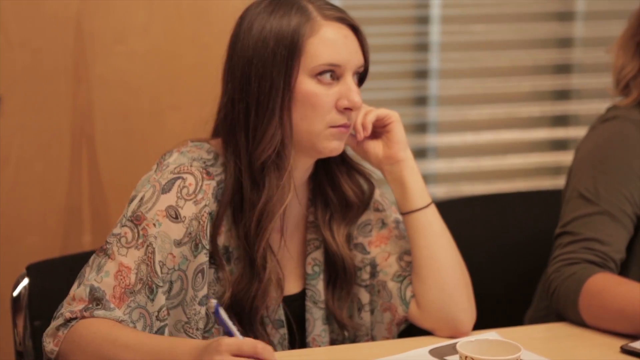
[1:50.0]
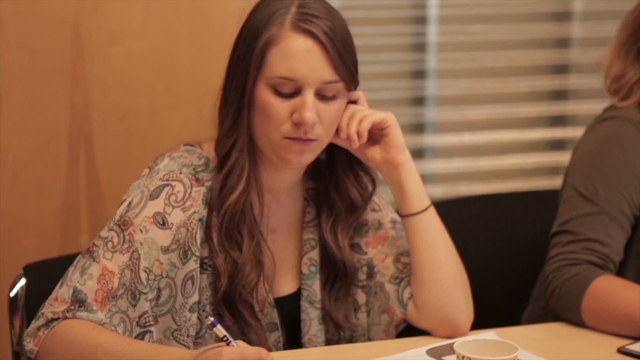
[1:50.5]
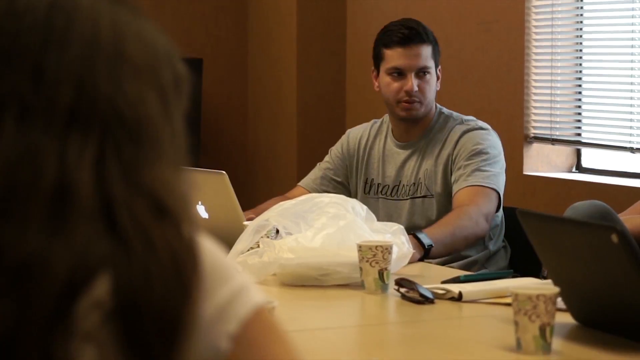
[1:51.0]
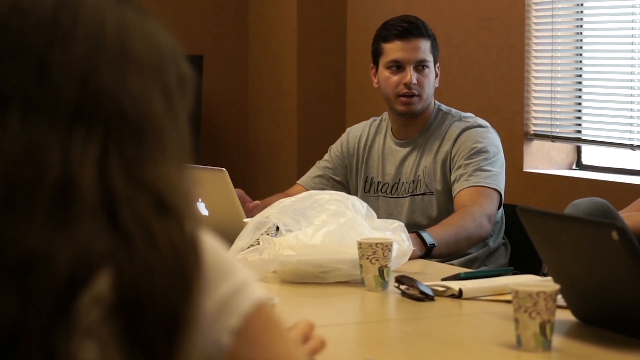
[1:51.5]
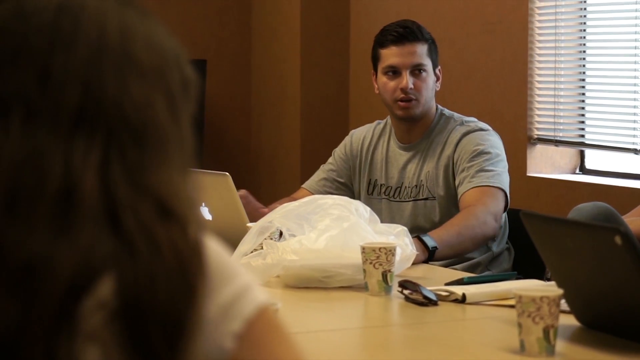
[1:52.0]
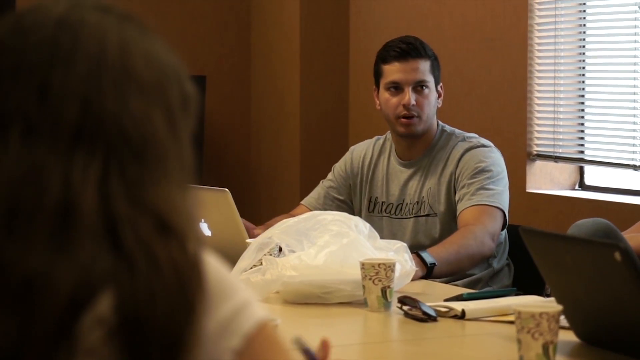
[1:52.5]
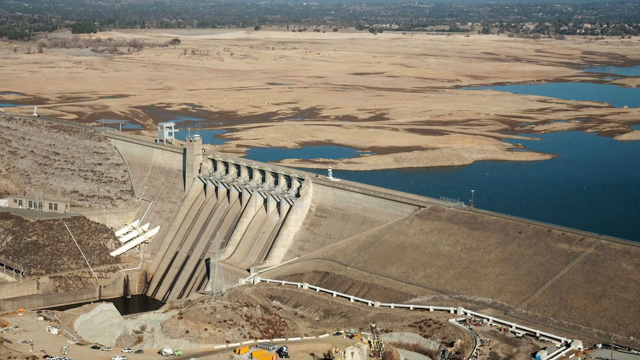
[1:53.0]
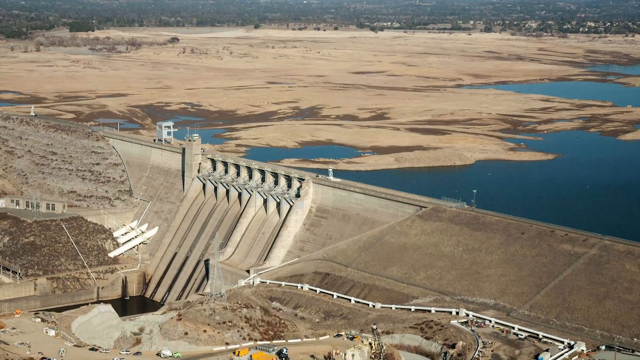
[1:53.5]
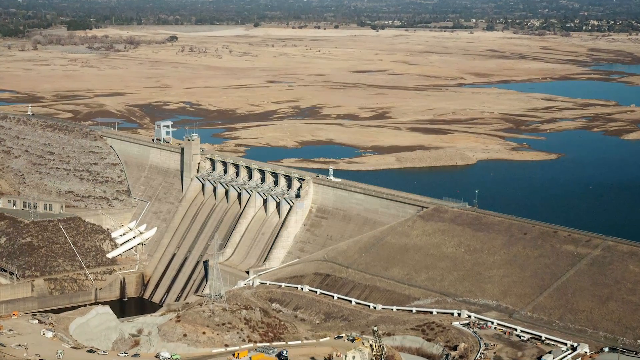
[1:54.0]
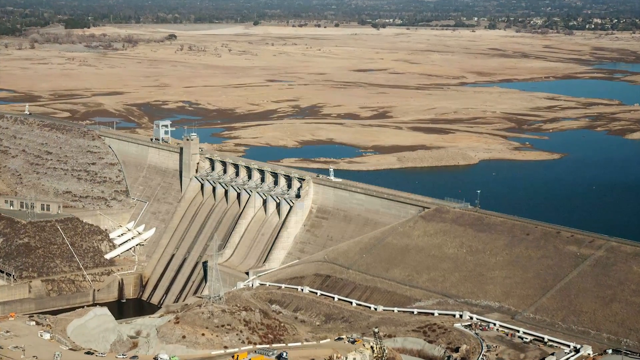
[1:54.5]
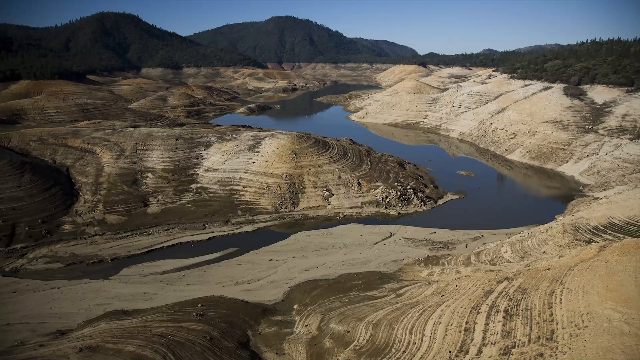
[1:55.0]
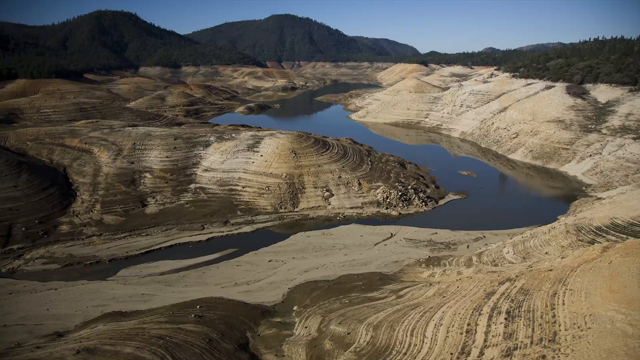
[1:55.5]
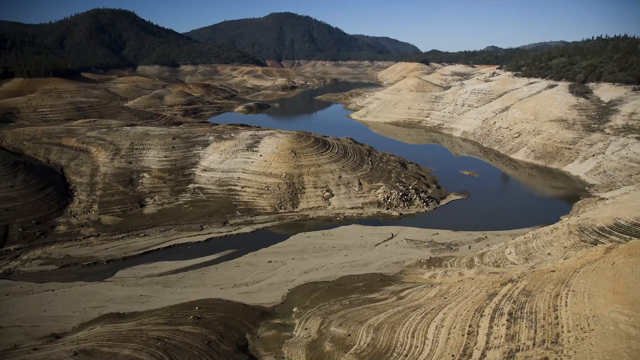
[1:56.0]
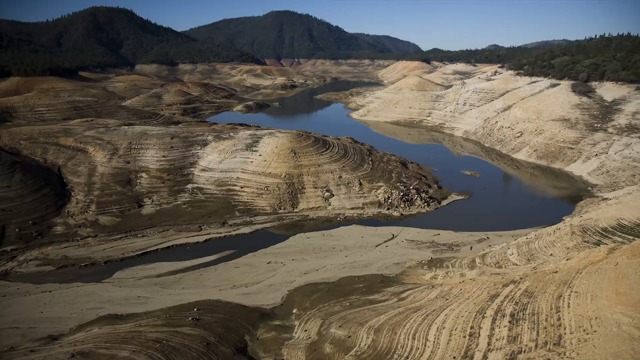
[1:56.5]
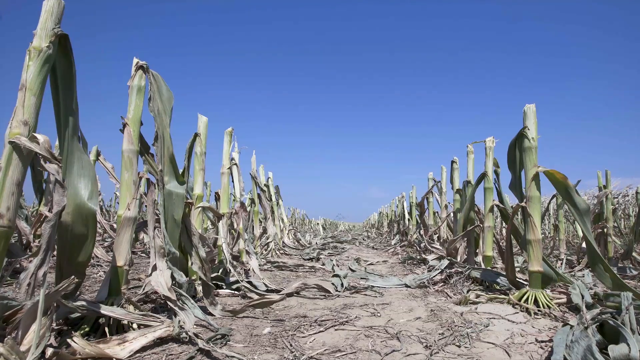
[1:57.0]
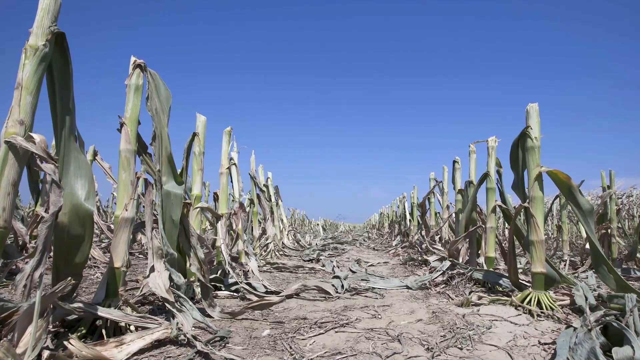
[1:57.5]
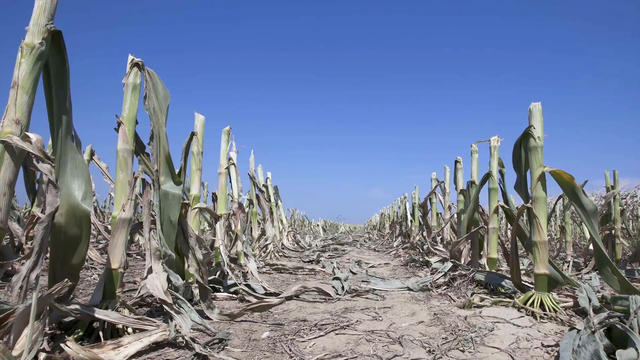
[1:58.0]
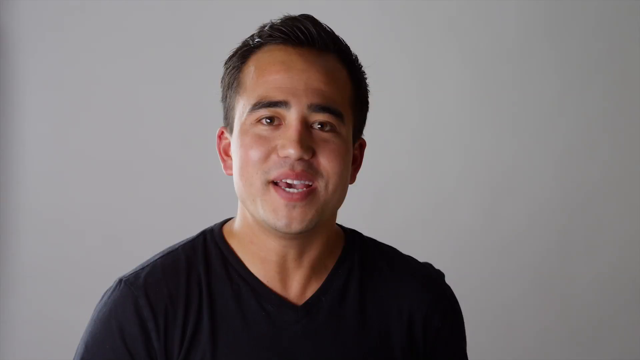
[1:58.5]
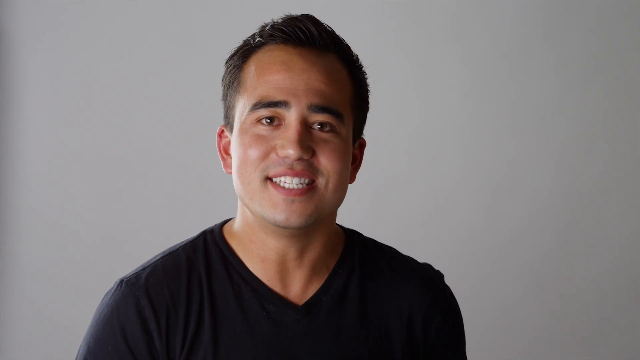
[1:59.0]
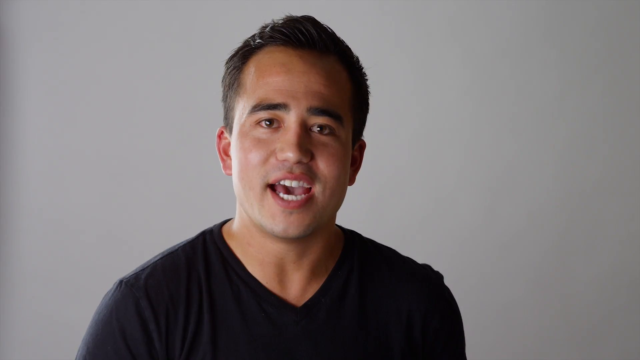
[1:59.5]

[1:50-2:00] A young woman, perhaps in her 20s, sits at a desk on a black chair. She has long brown hair that reaches her chest area and wears a floral dress. Her left arm is raised to her cheek so that she is somewhat leaning on it, and she is looking towards the right; she seems to be listening to someone. The video then shows a young man, perhaps in his 20s, with medium-length black hair and a grey shirt, talking to people around the table. Finally, static images appear of areas that seem to be lacking in water.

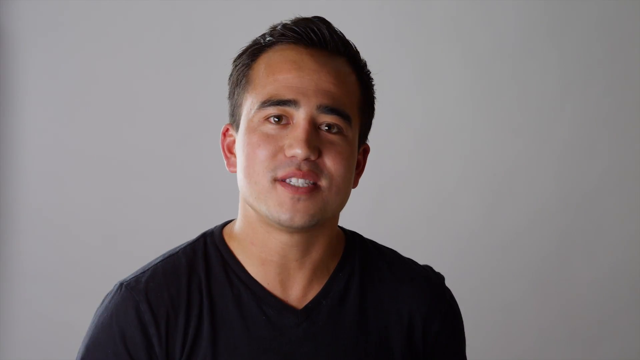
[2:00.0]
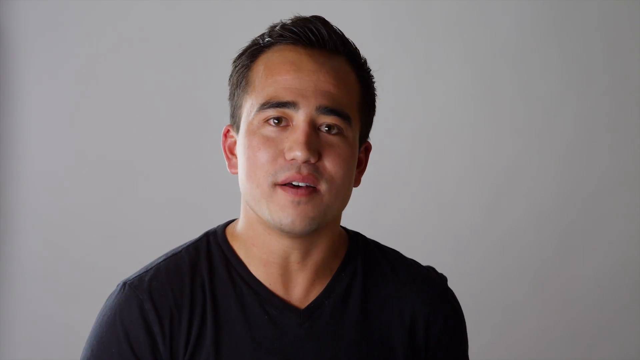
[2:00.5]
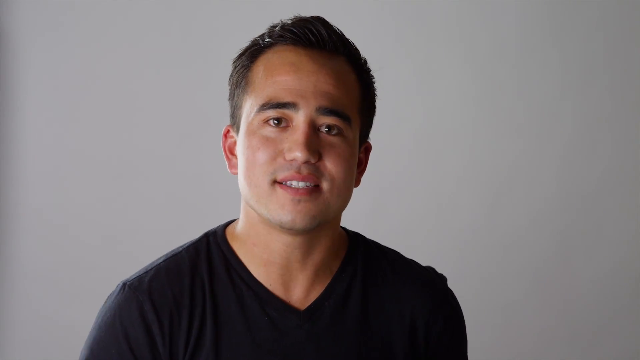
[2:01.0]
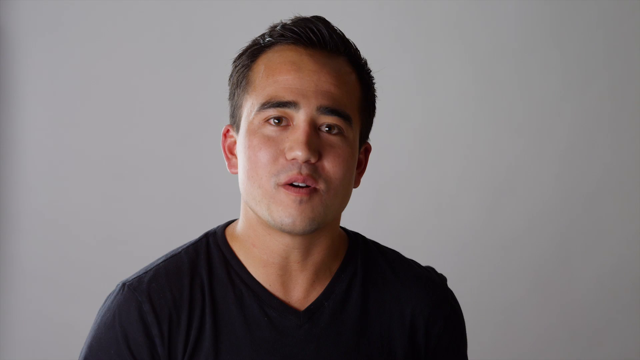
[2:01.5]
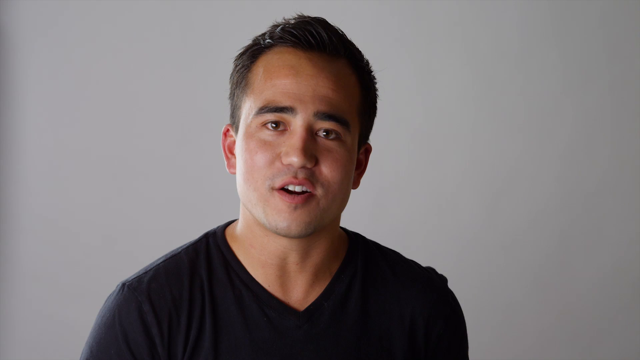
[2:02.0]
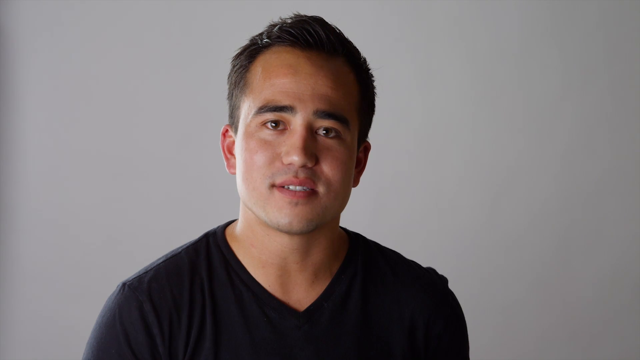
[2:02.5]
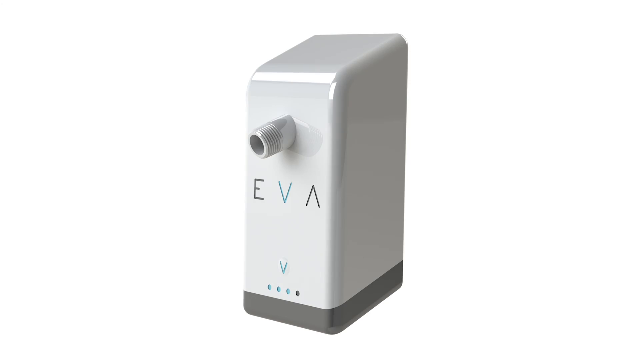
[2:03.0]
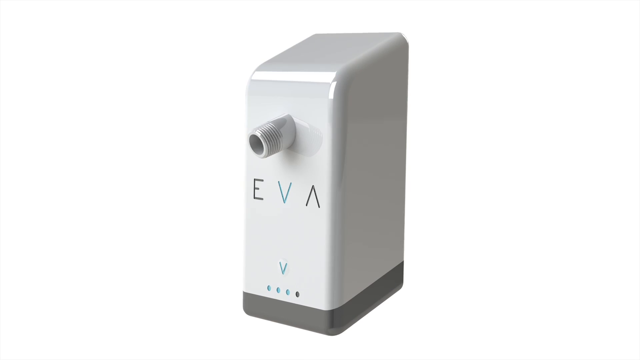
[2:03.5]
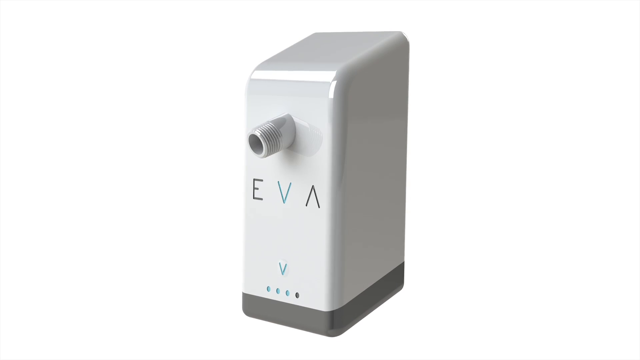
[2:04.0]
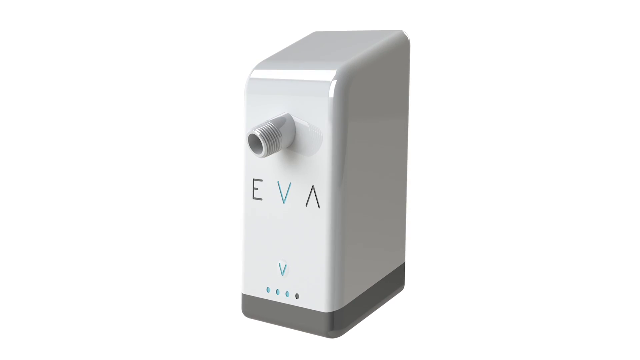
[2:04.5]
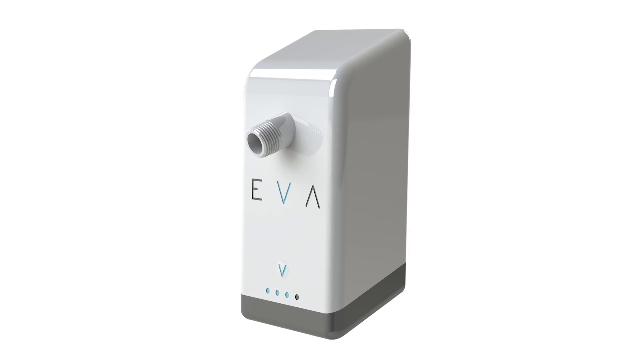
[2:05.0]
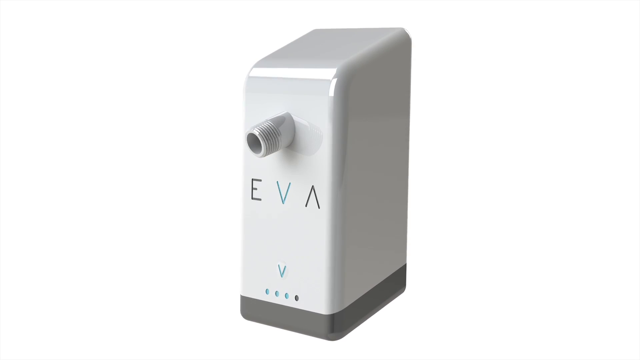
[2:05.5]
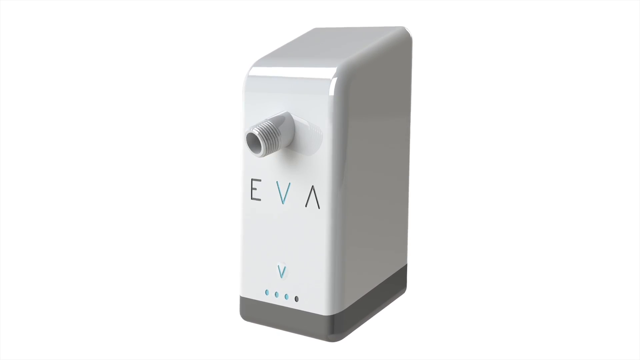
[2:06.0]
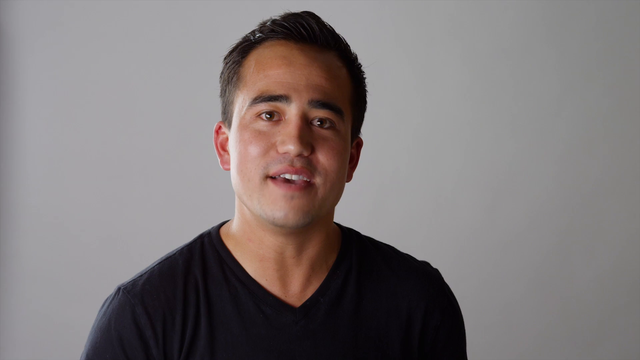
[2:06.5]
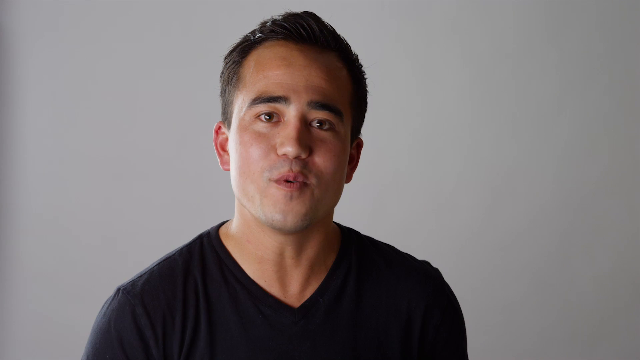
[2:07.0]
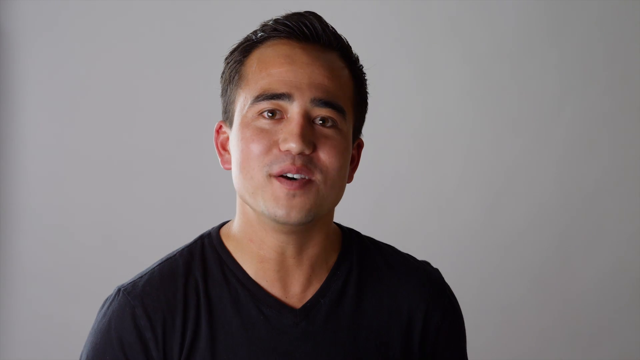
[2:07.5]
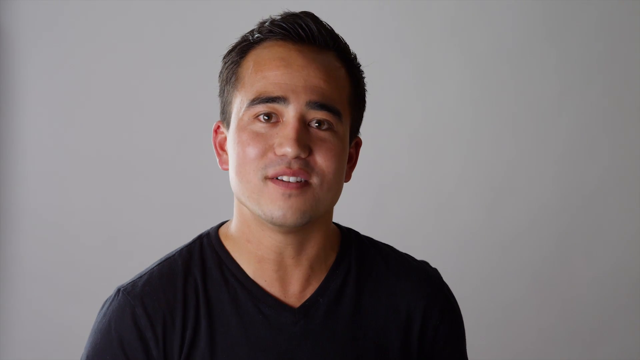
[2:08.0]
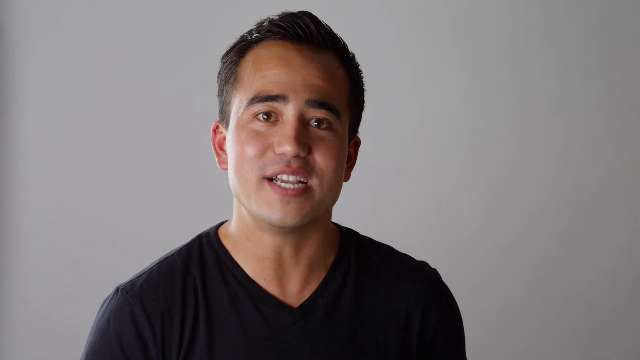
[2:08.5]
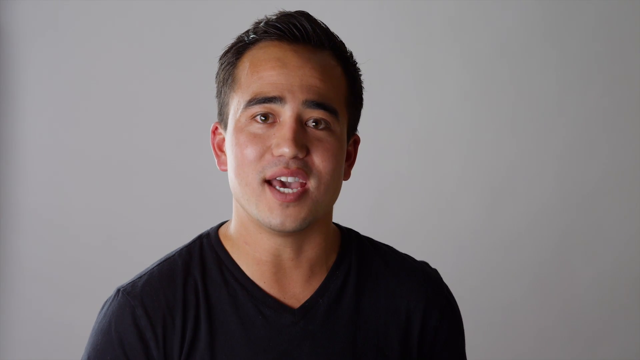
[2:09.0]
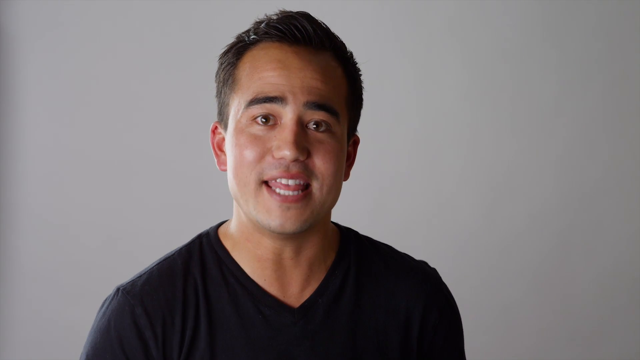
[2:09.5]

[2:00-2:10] A young man speaks while looking directly at the camera. He has medium-length black hair, is perhaps in his twenties, is clean shaven, Caucasian and of medium build, and wears a black T-shirt. After he talks for a few seconds, a picture of the device being sold, the EVA device, appears: a white shiny instrument with the text "EVA" on it, the letter V followed by four small circles, and a black base. The video then returns to the man speaking.